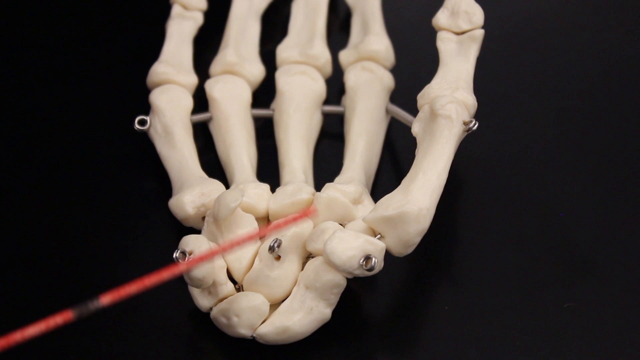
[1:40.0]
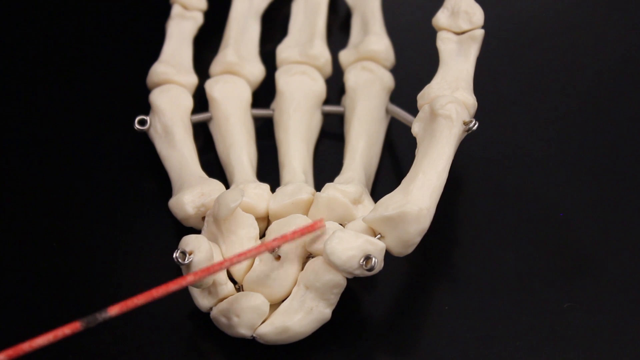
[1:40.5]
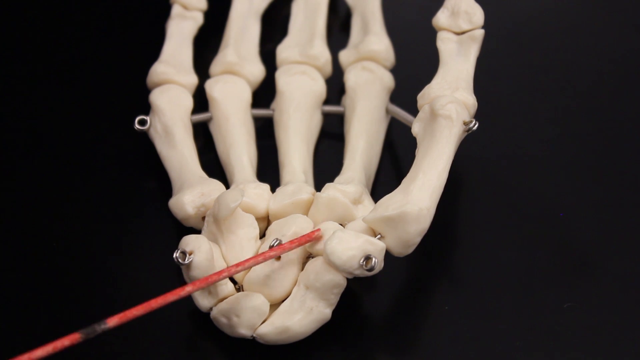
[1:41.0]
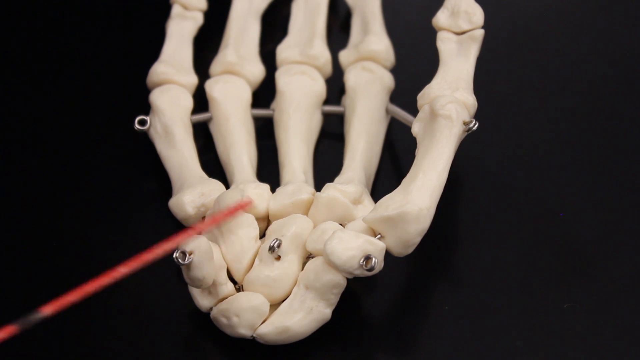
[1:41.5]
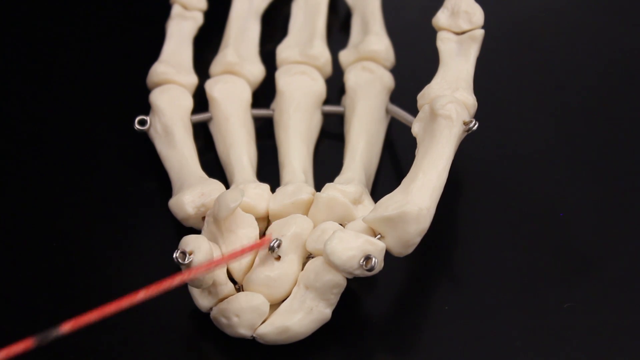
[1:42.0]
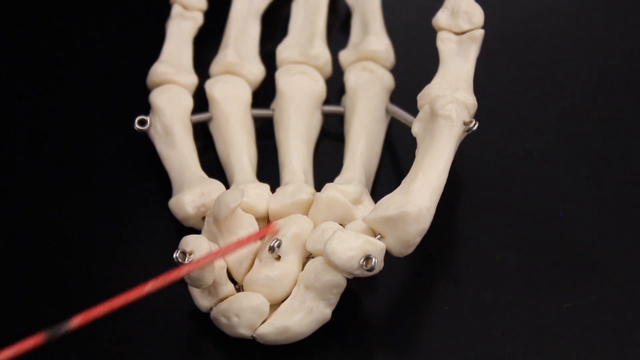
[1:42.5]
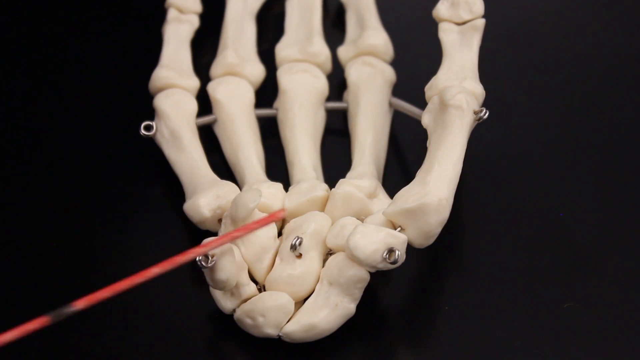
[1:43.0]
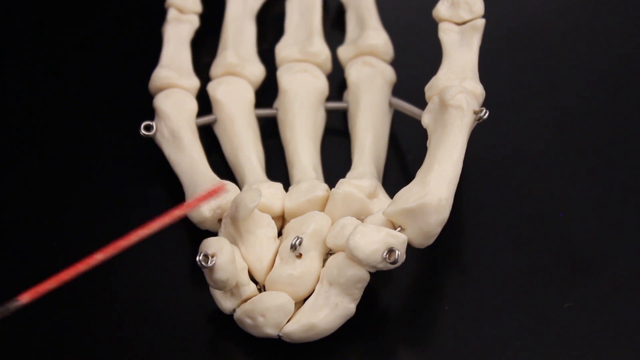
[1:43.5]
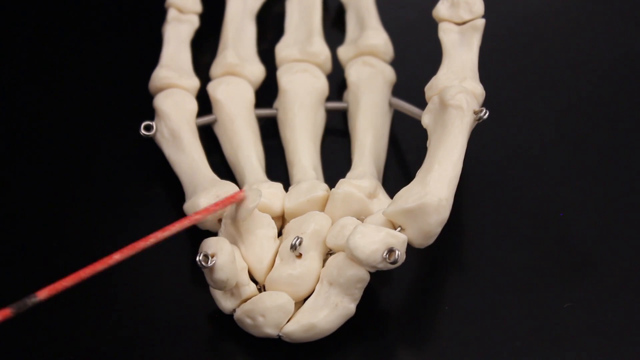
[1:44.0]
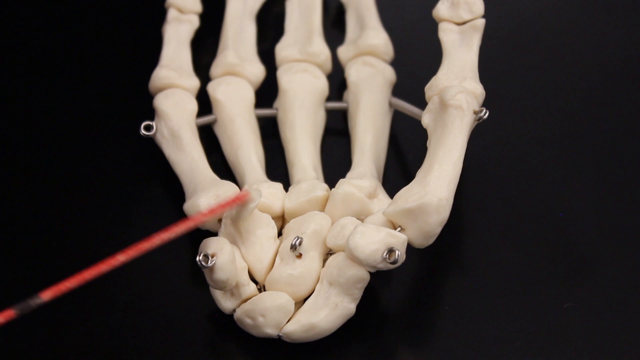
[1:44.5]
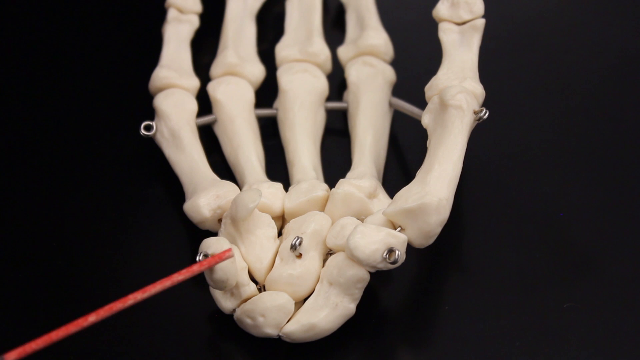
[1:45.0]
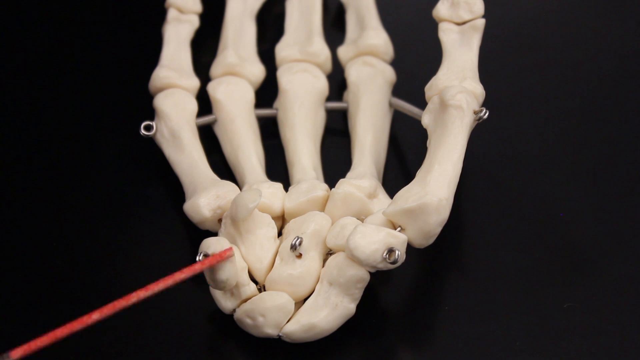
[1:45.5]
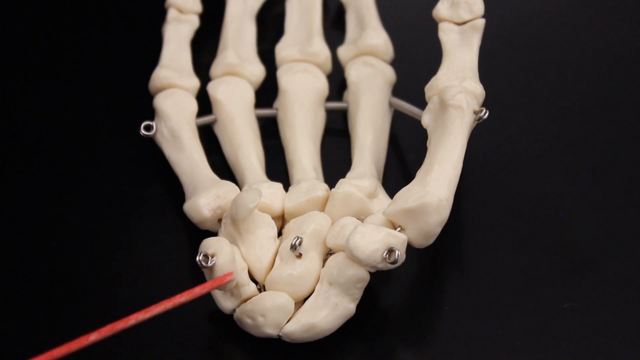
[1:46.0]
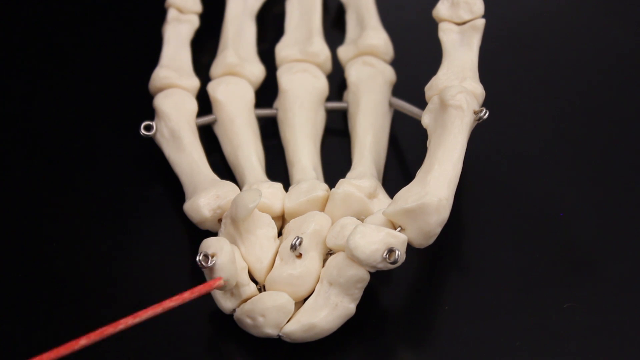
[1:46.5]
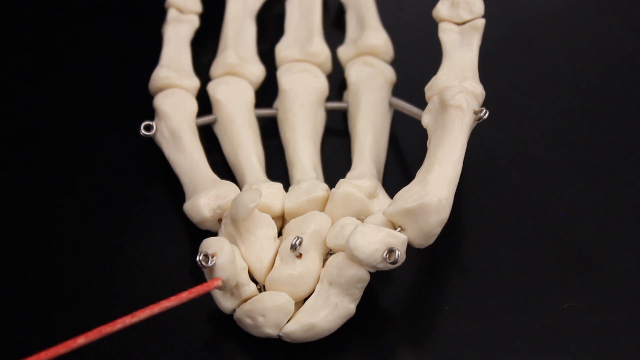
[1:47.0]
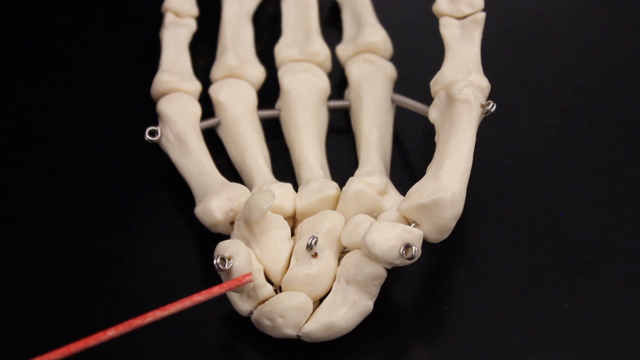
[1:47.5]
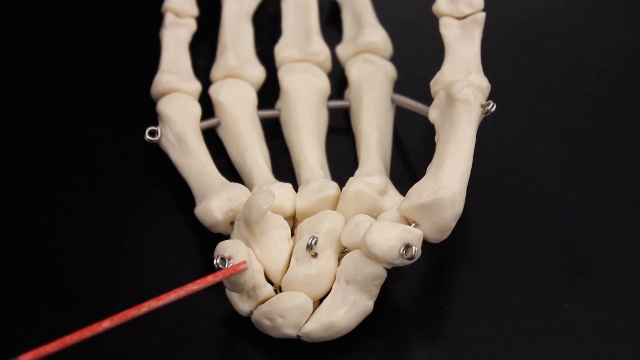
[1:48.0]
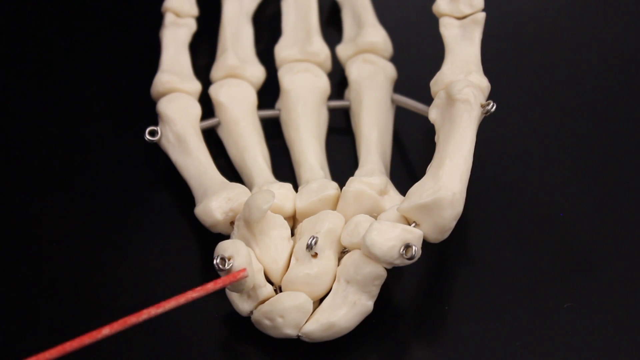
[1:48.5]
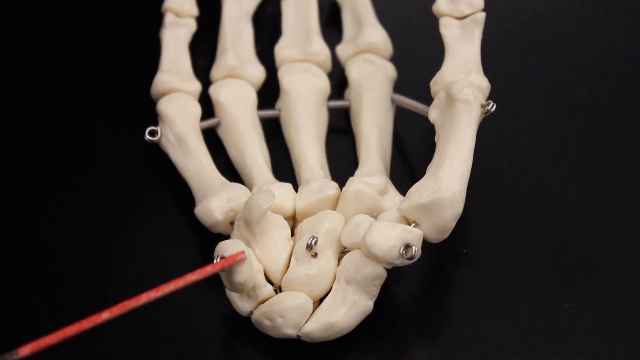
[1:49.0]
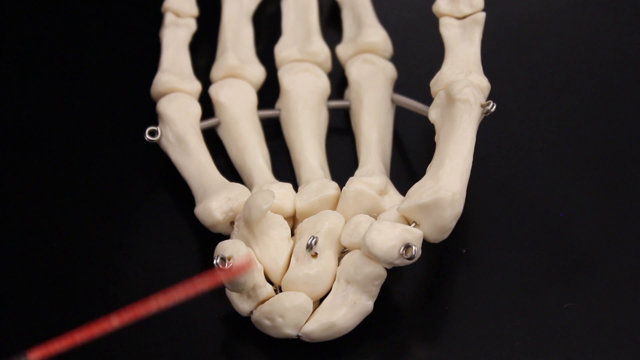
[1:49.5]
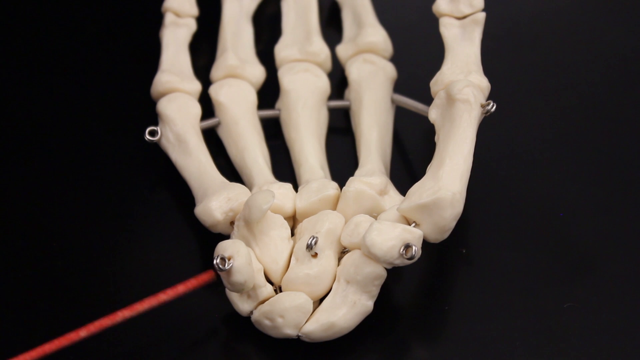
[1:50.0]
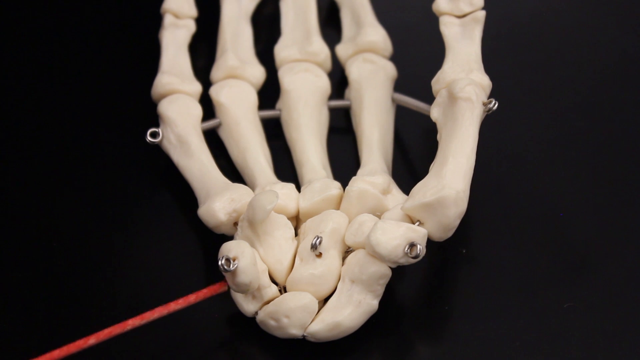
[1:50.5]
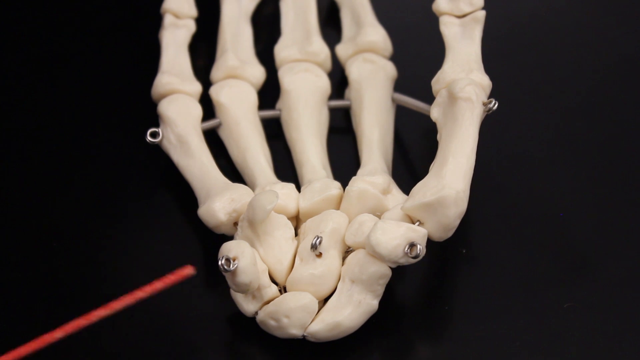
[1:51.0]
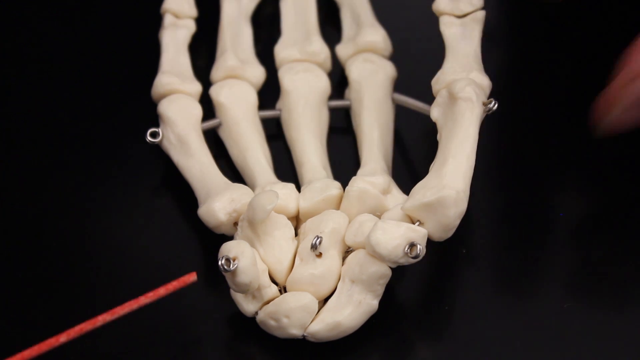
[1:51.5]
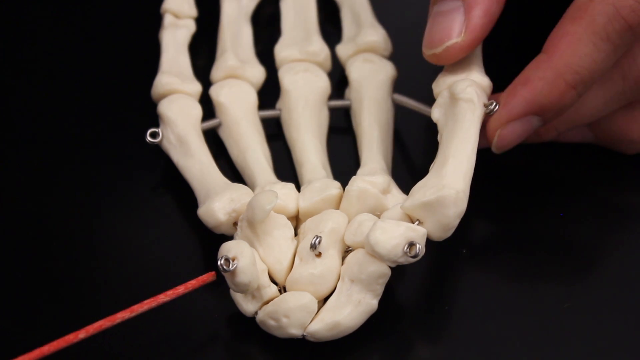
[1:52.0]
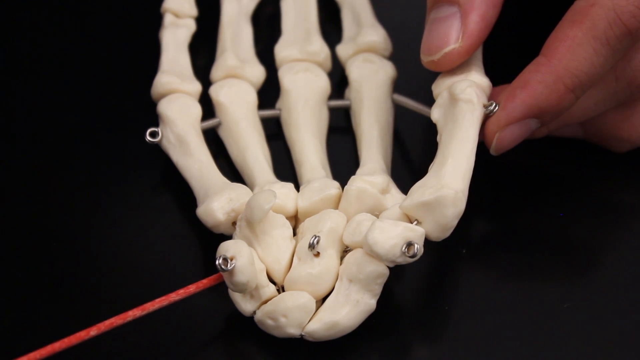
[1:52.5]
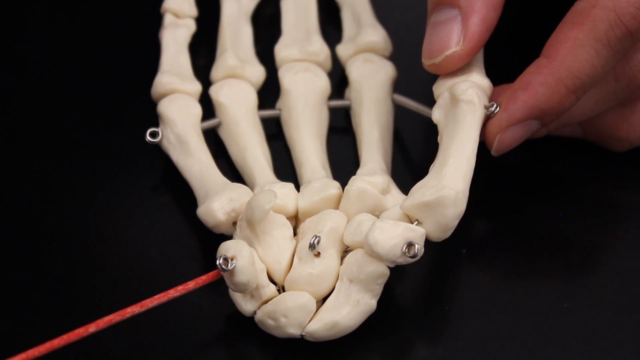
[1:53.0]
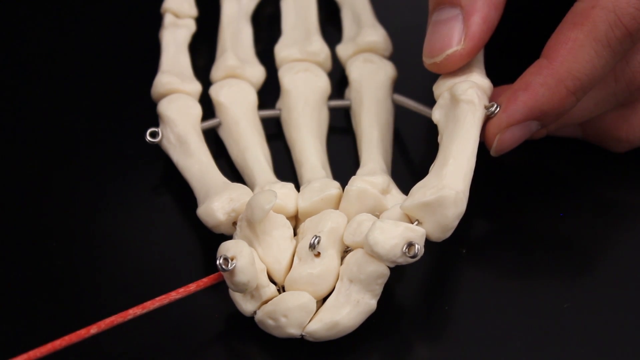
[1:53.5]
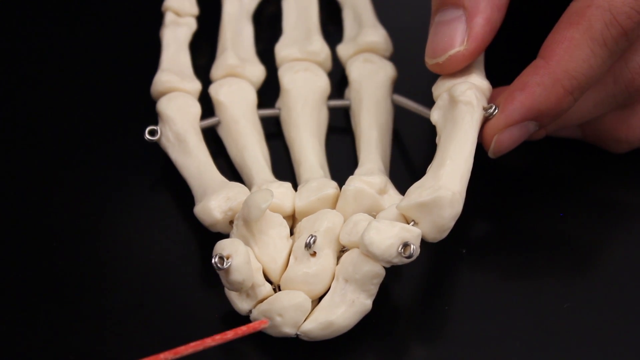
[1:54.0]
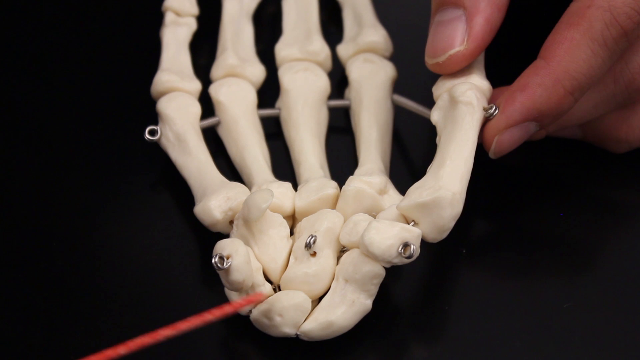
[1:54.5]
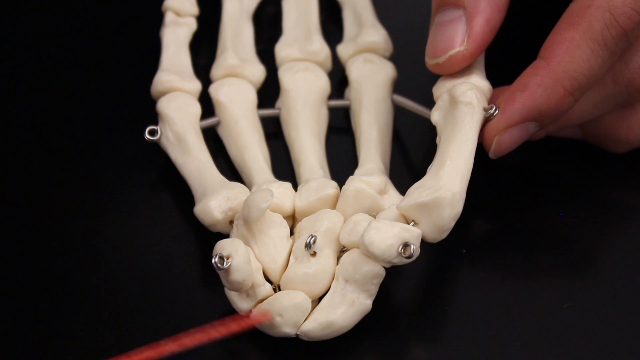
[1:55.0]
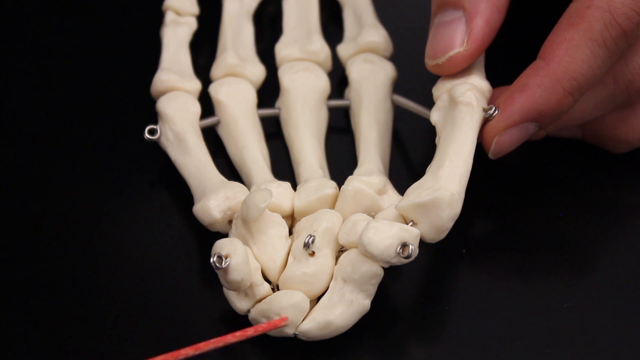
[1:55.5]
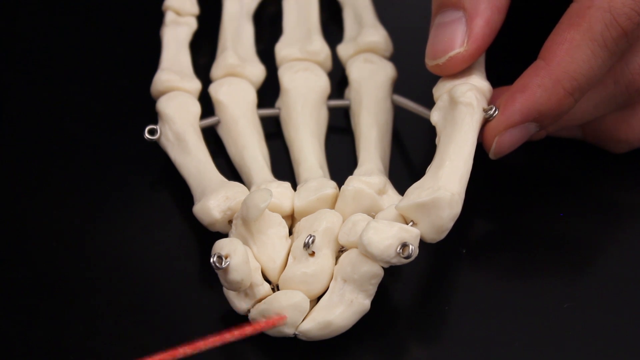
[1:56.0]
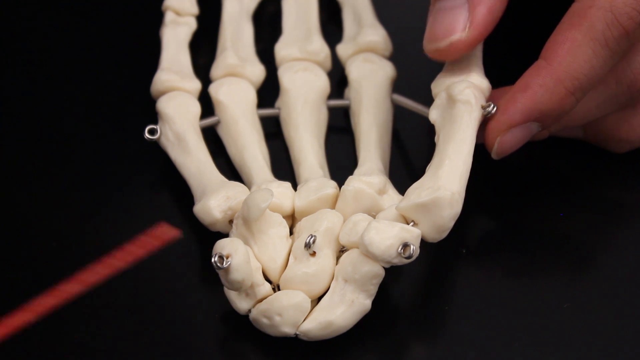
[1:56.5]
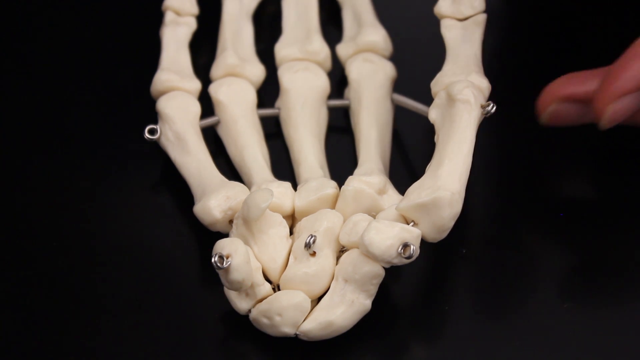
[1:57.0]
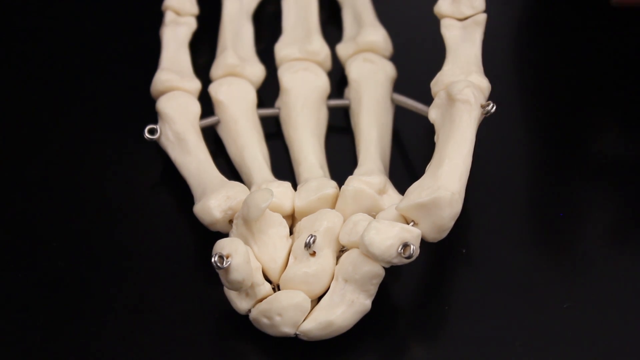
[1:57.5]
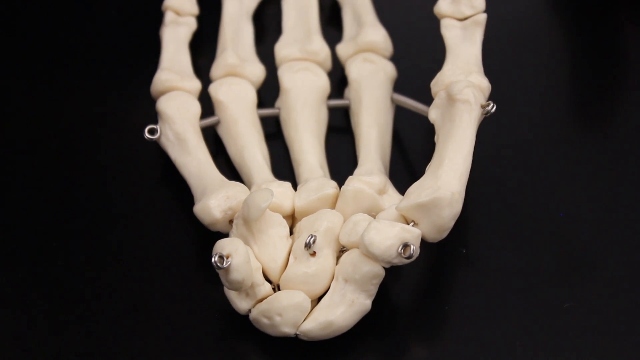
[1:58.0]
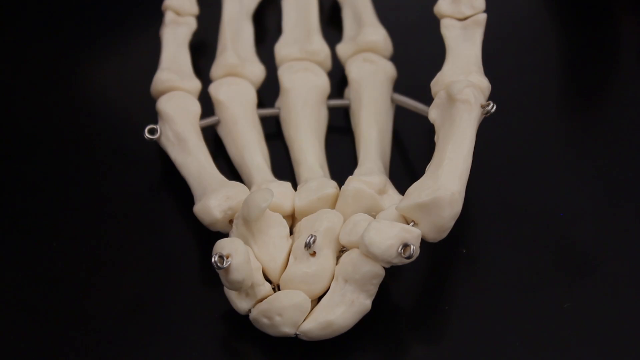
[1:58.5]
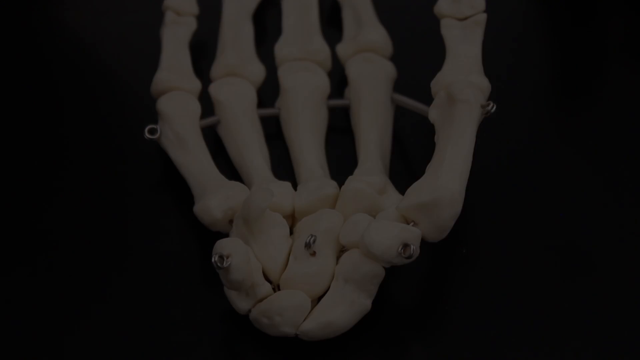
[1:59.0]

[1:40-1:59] A model skeletal human hand, specifically the right hand, rests palm up on a flat black surface with the thumb on the right side. A pink painted stick comes from the bottom left corner and is used to point out various bones. It taps different bones on the palm, slowly rubbing against each one as if explaining what they are, then starts rubbing against the bones on the left side of the palm. The person using the stick uses their other hand to stabilize the model, gripping the thumb bones with their thumb and index finger to straighten the skeletal hand out and hold it steady while they continue poking various bones on the palm. Then they pull their hand off frame, and the stick is pulled off frame as well.